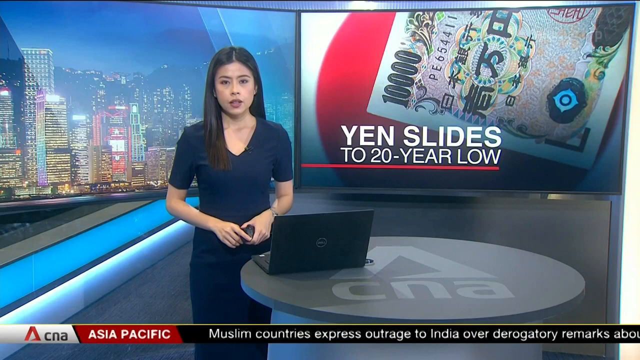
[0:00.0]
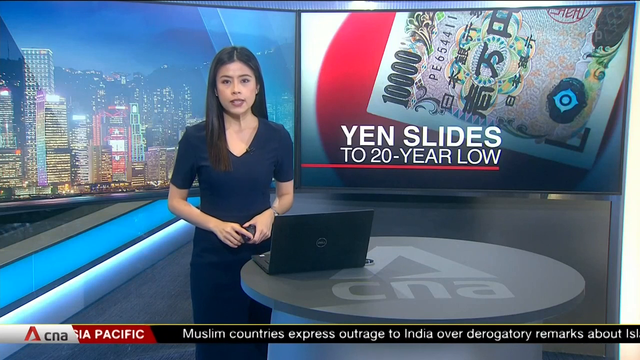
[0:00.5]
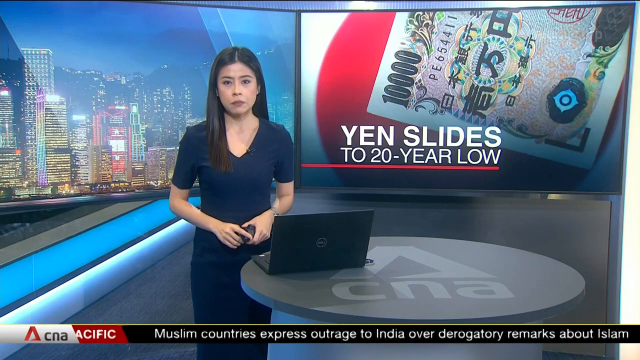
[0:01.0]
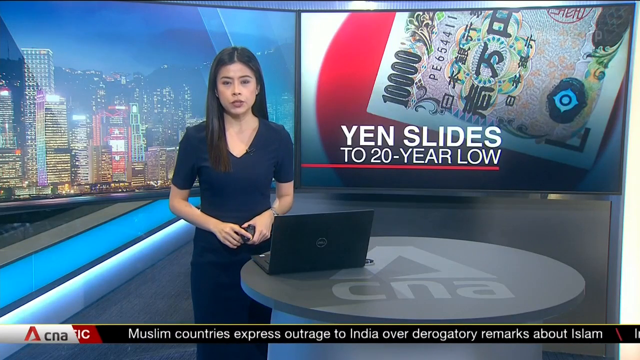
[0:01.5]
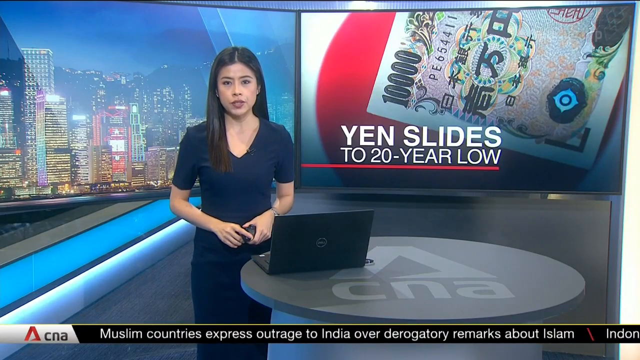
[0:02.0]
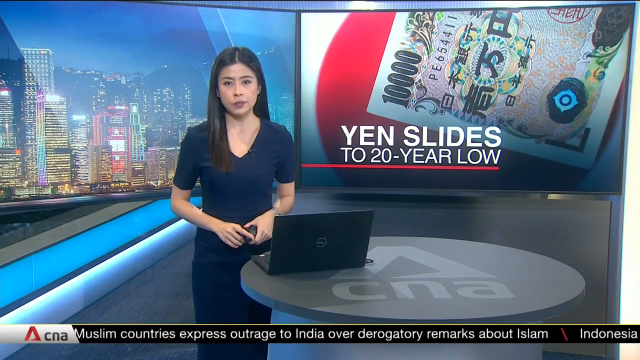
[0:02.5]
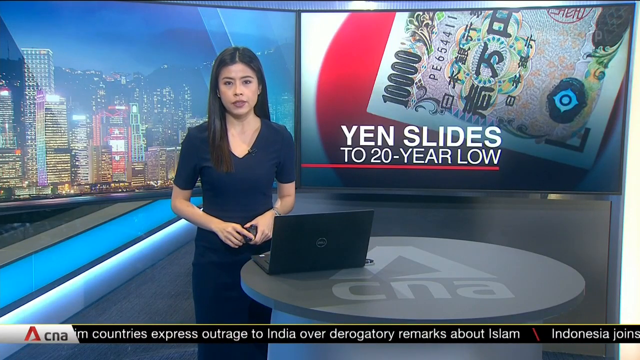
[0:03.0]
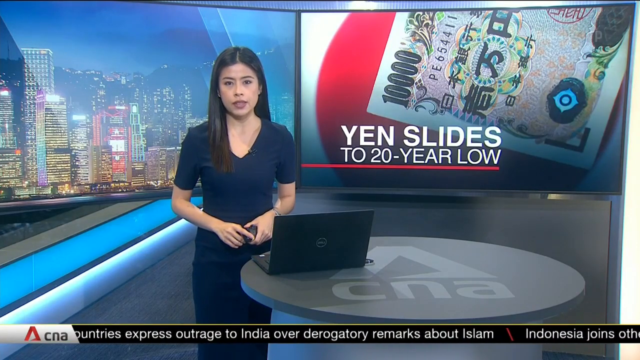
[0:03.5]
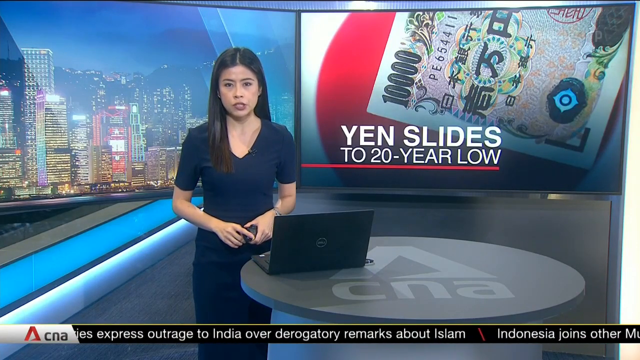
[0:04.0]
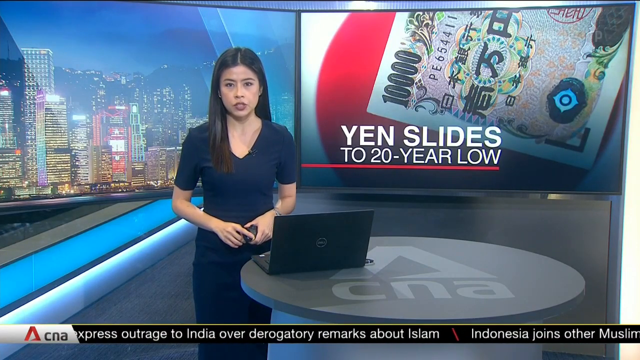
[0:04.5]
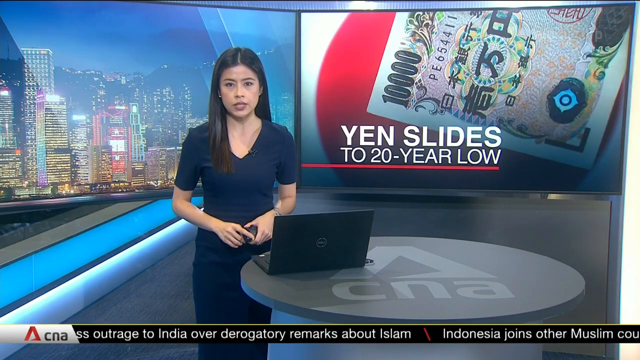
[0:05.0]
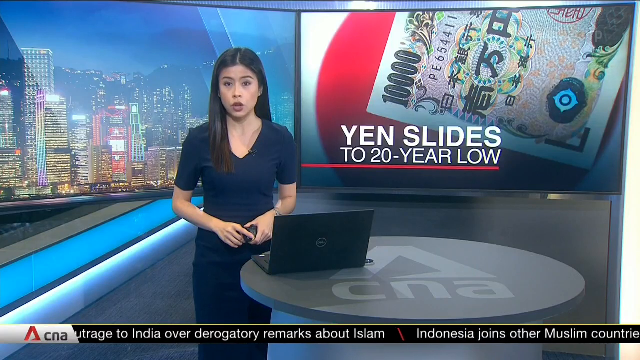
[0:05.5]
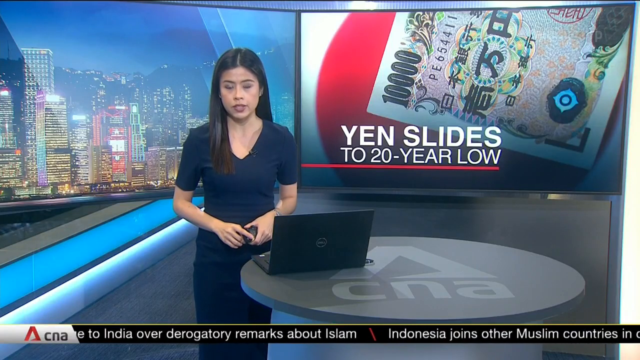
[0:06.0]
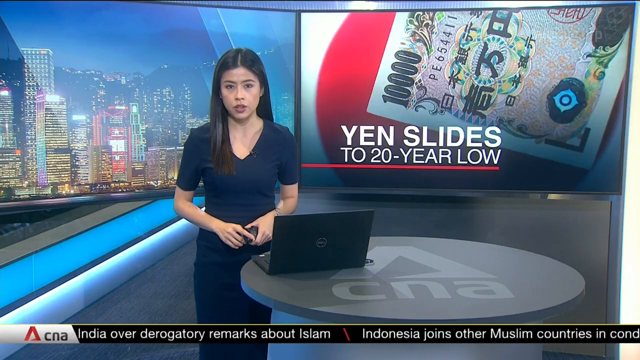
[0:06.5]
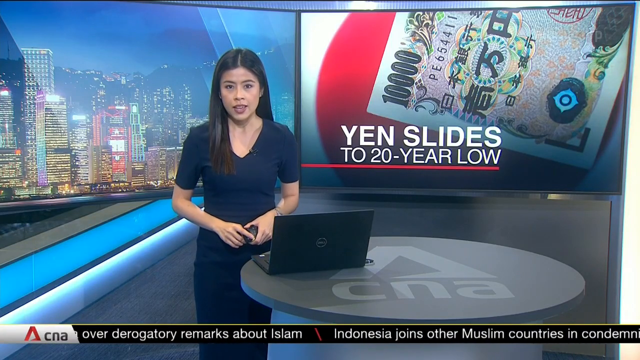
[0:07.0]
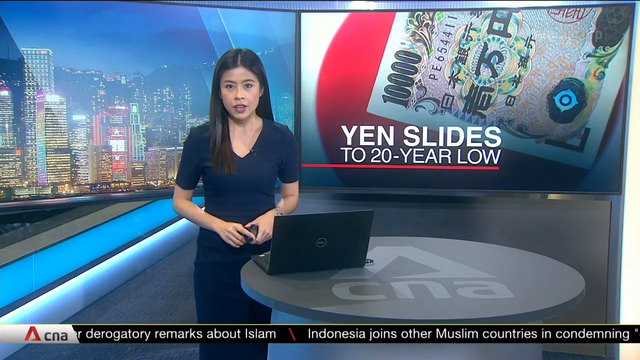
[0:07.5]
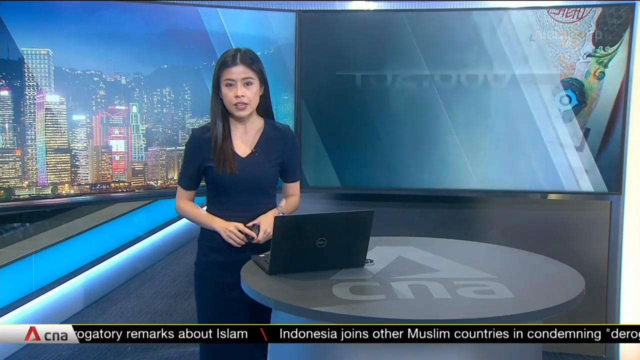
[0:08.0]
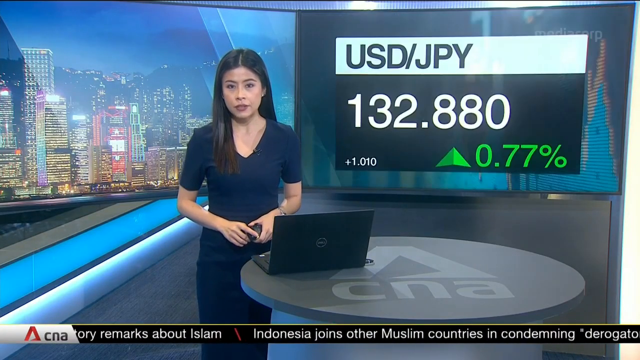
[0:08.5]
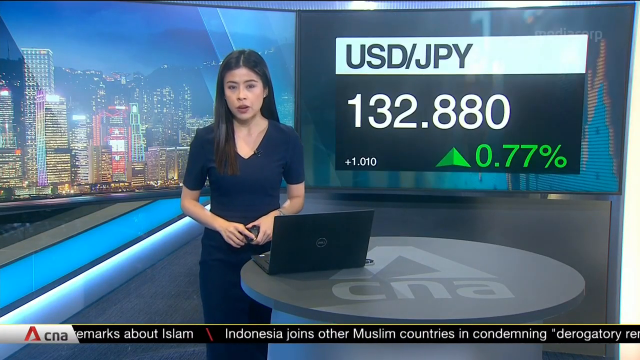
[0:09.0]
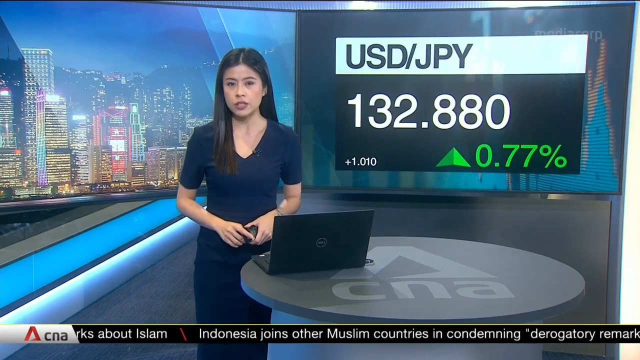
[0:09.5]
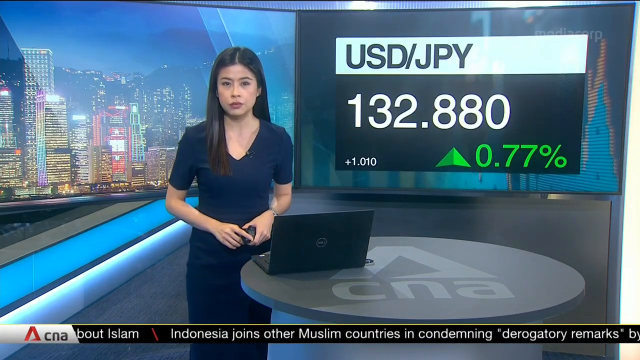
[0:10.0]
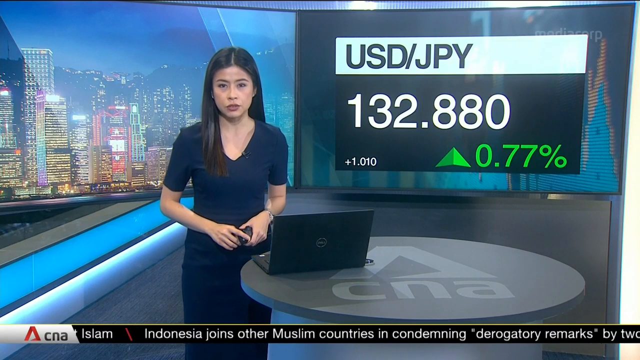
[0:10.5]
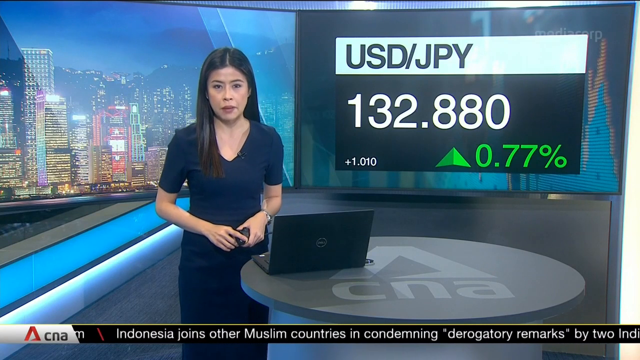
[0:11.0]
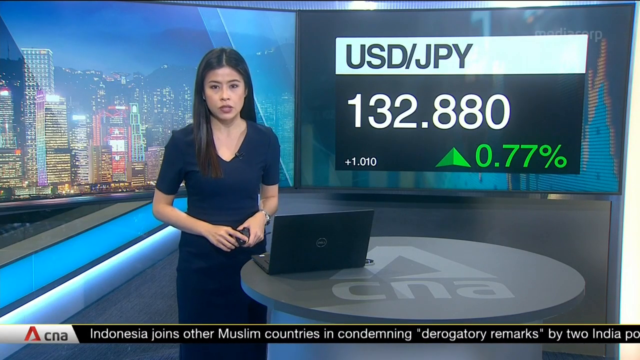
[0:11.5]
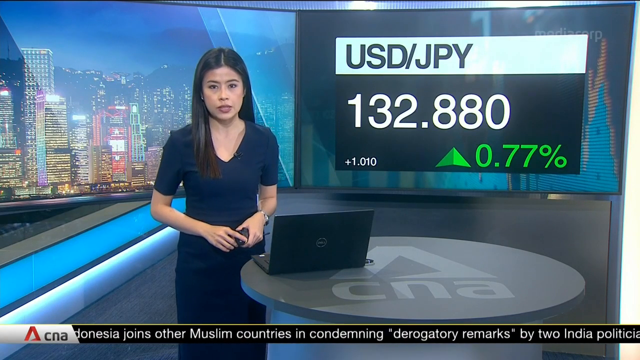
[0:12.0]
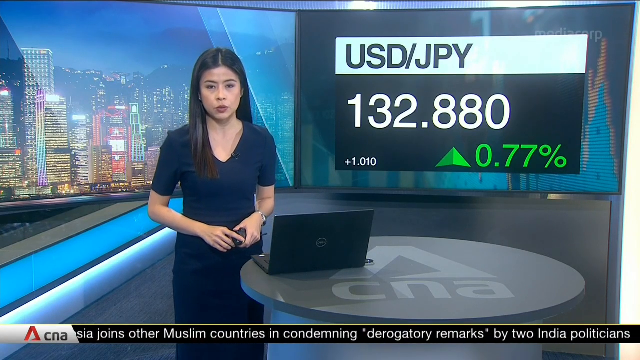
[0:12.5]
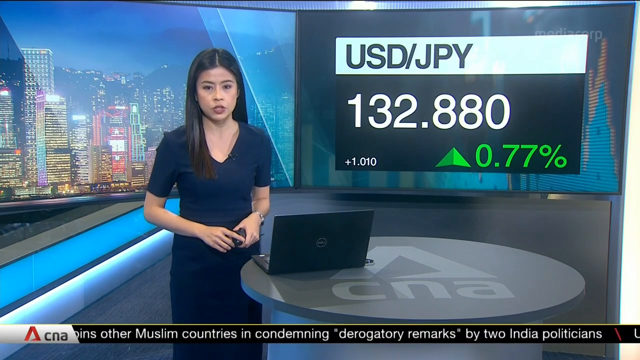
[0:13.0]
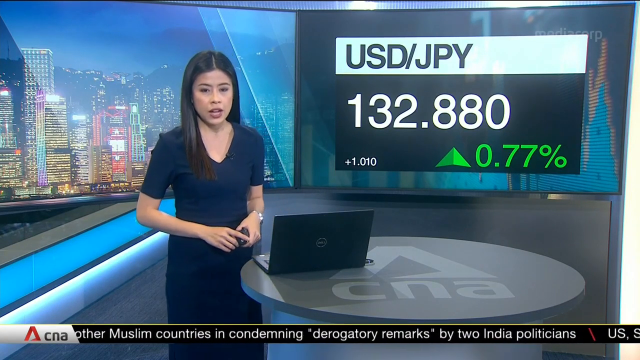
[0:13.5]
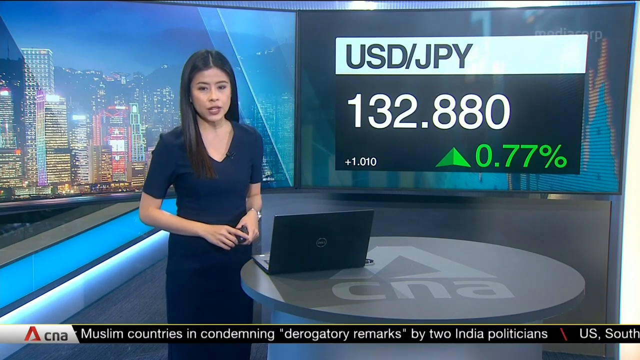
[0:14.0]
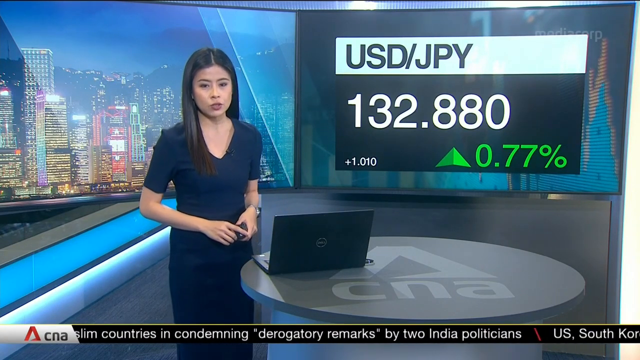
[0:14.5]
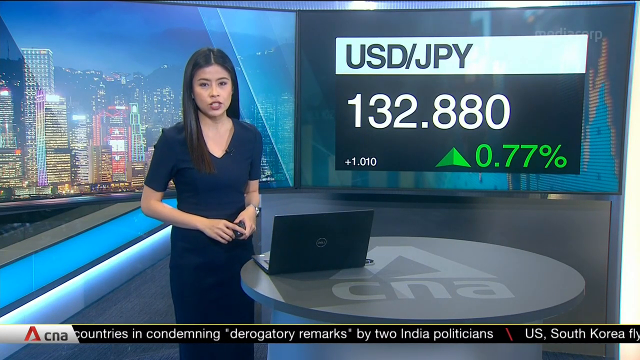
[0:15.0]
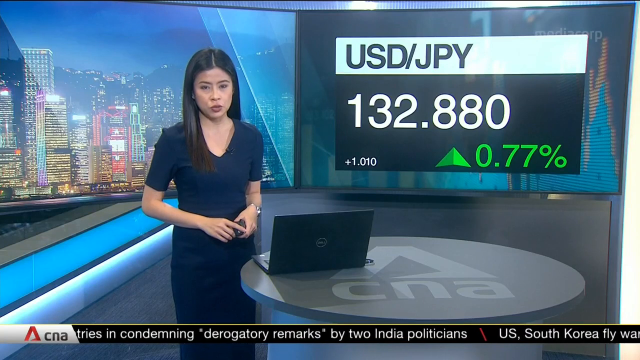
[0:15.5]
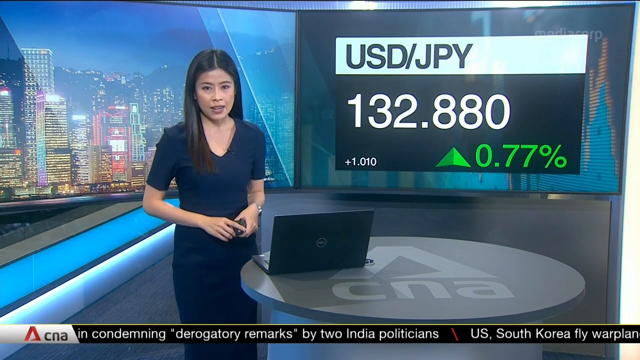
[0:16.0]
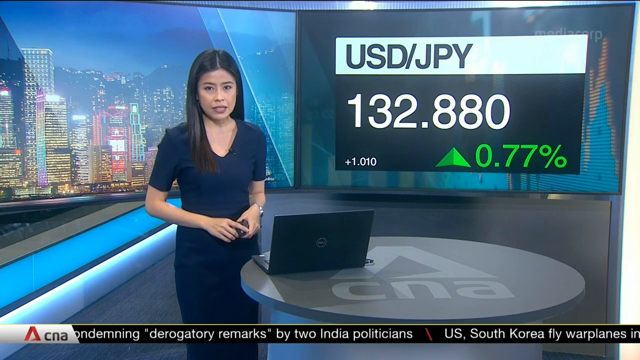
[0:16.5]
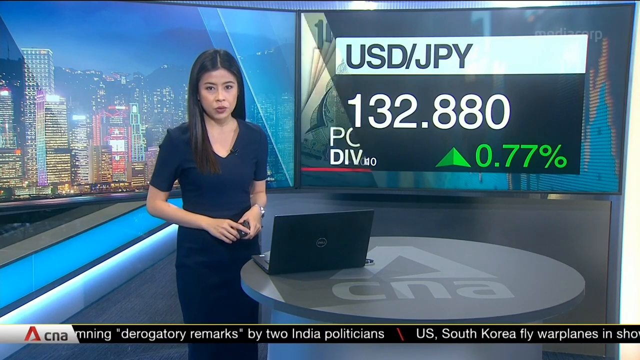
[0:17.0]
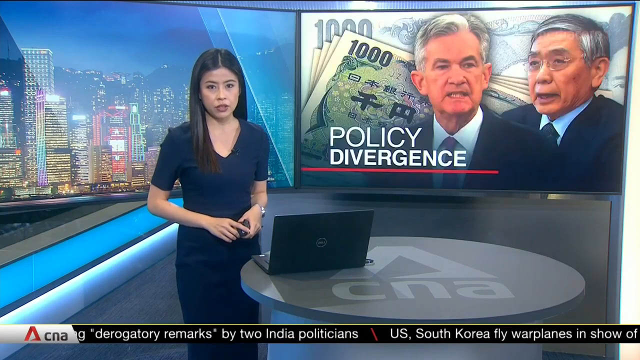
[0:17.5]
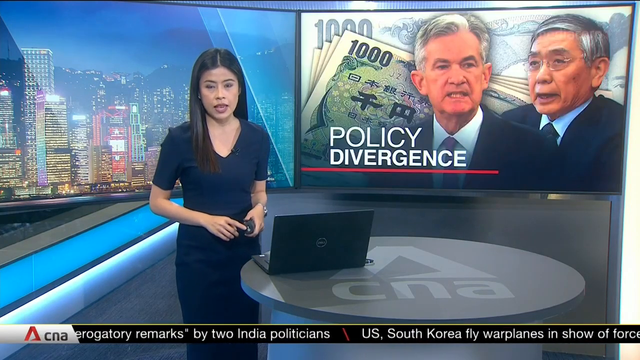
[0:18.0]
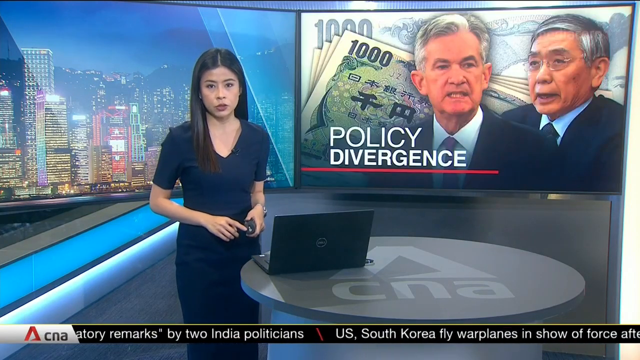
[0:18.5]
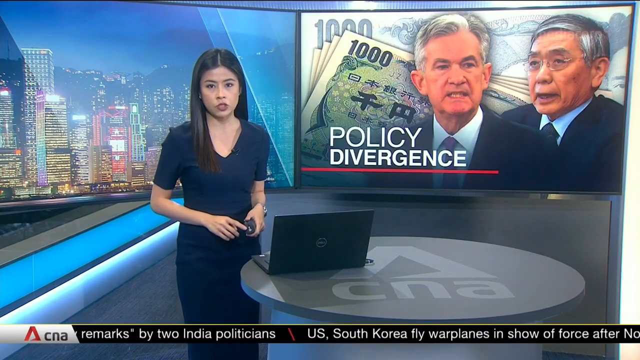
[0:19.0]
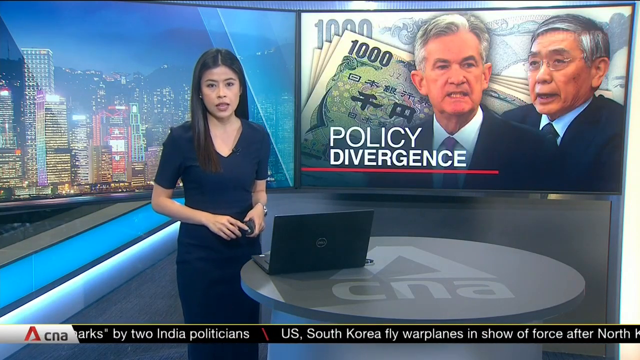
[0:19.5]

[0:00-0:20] A woman news reporter is at a round desk with a black Dell laptop in front of her. The desk appears to read "CNA" with a triangle logo, apparently the name of the news channel. On the right side of the image, text reads "Yen slides to 20 year low," and the corner of a 10,000 yen bill is visible. The correspondent wears what looks like a navy blue dress with a V cut and short sleeves that stop above the elbow but below the shoulders. She has some type of metal bracelet or watch on her left wrist. Part of the Japanese flag, the red circle and some of the white, is visible. Her mouth is moving as she speaks.